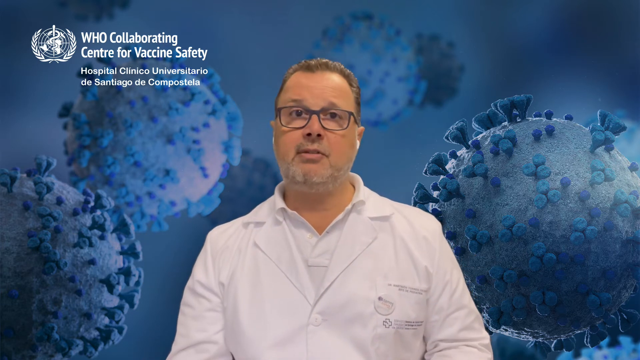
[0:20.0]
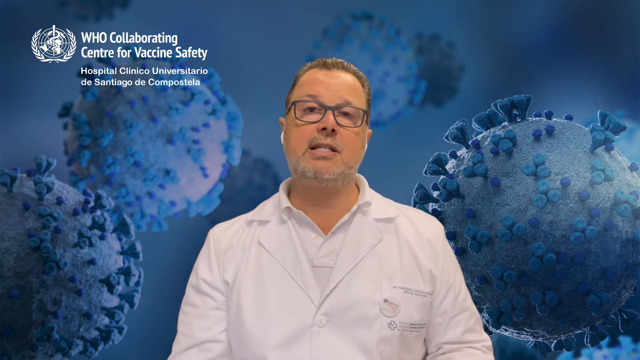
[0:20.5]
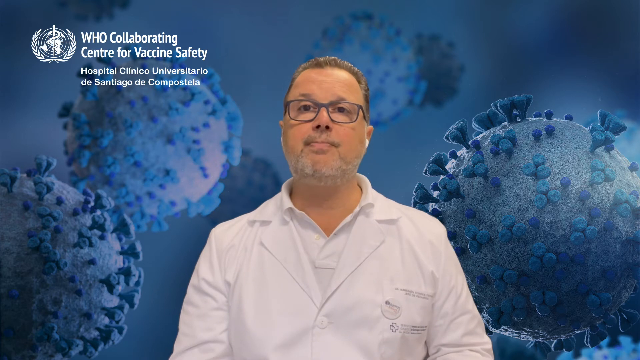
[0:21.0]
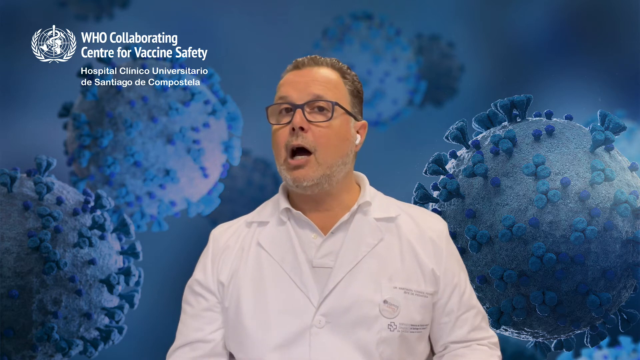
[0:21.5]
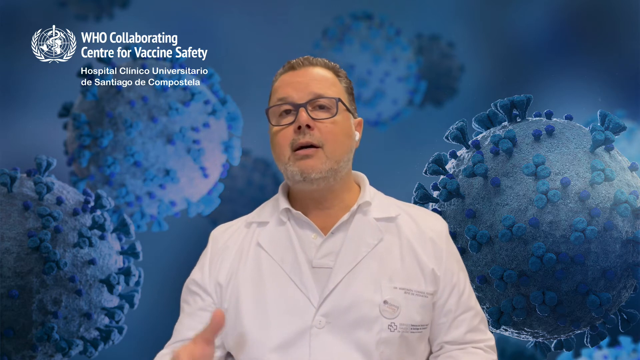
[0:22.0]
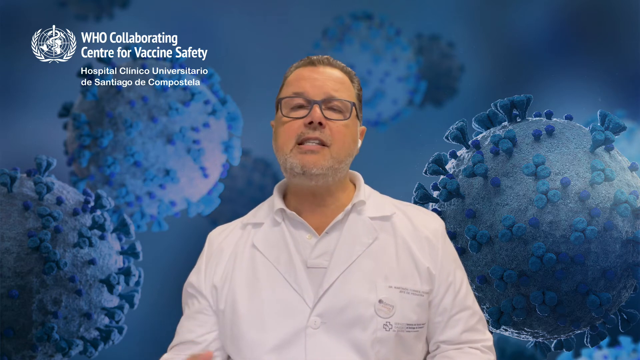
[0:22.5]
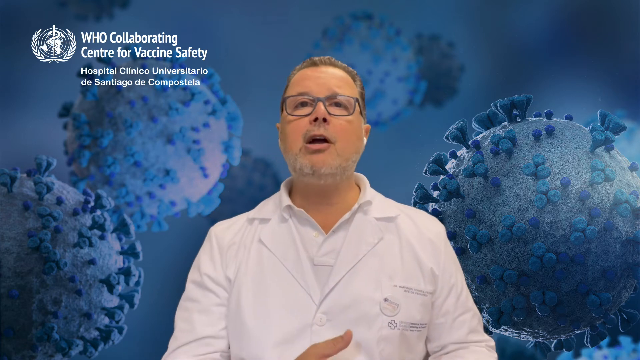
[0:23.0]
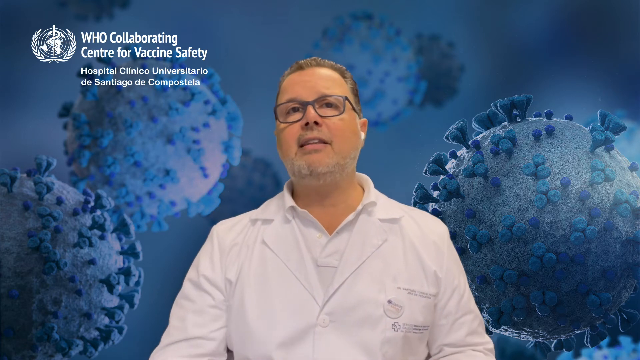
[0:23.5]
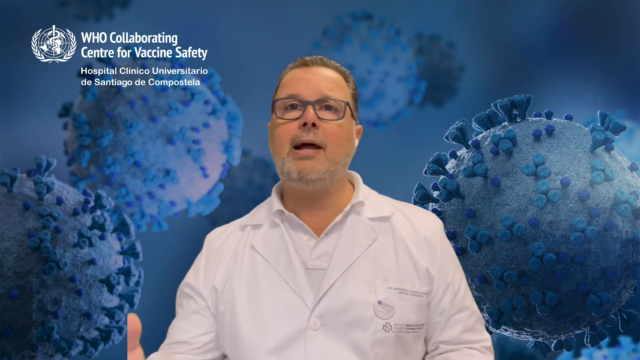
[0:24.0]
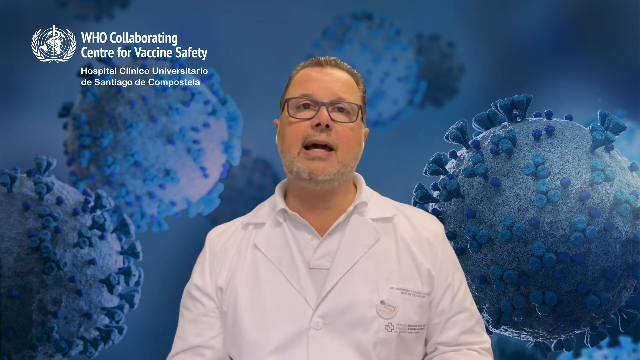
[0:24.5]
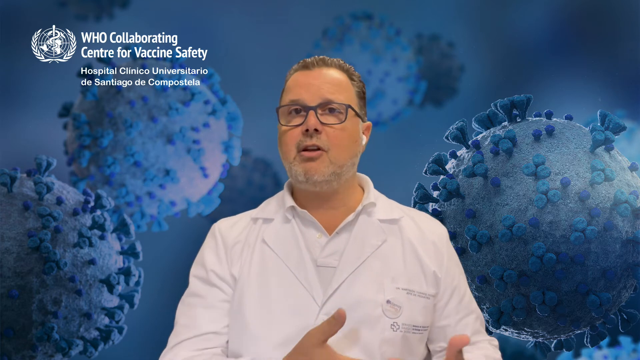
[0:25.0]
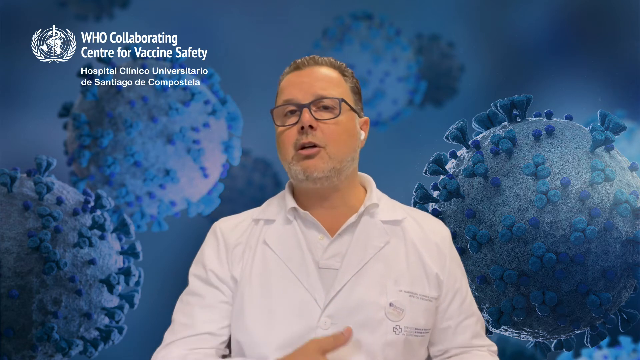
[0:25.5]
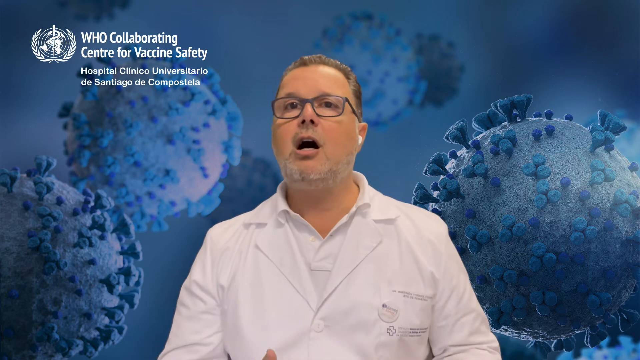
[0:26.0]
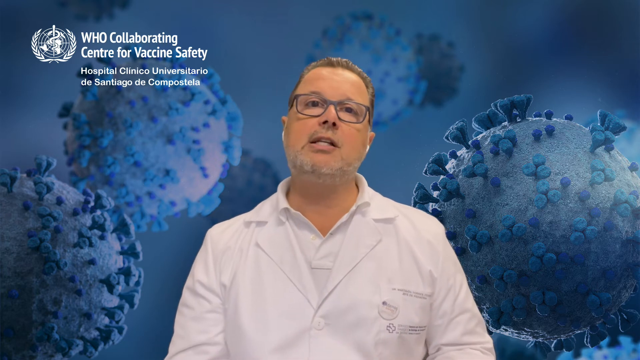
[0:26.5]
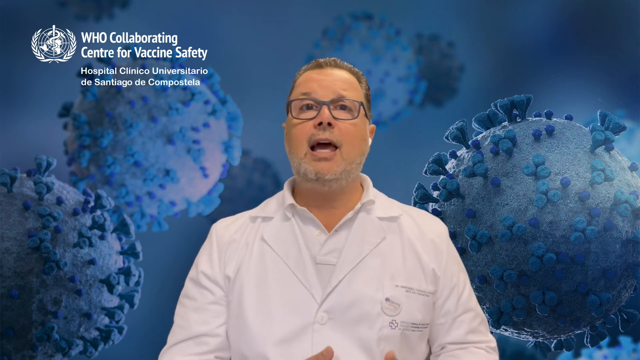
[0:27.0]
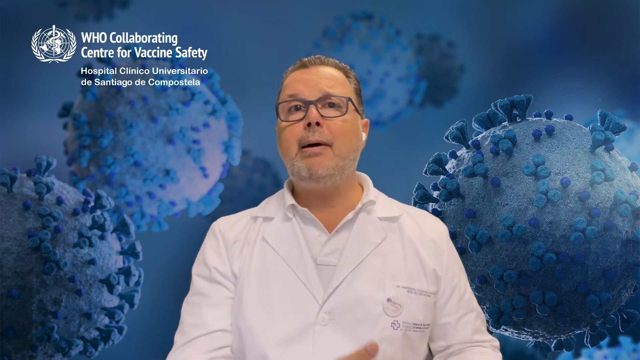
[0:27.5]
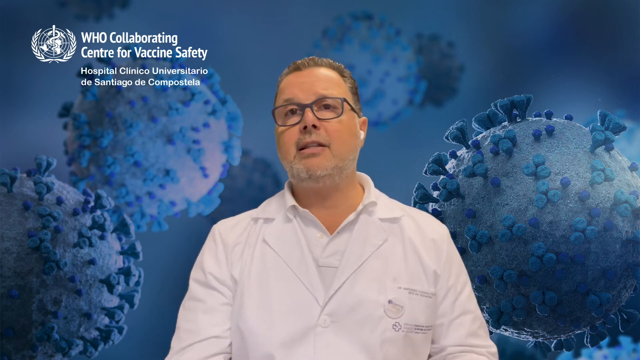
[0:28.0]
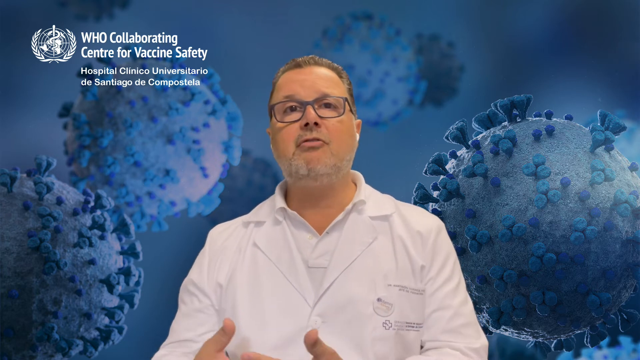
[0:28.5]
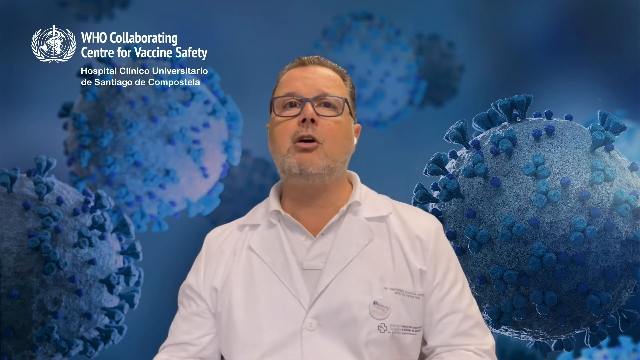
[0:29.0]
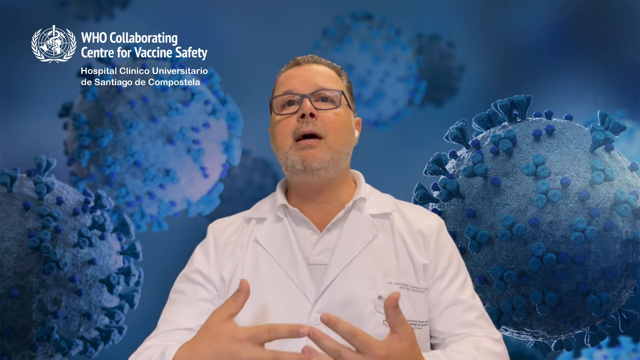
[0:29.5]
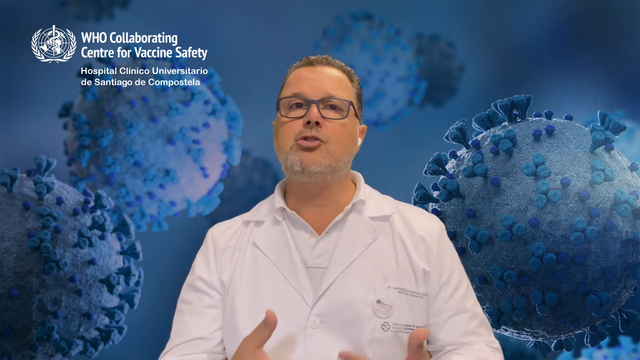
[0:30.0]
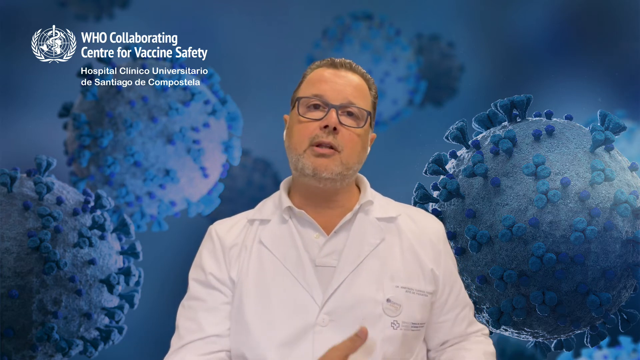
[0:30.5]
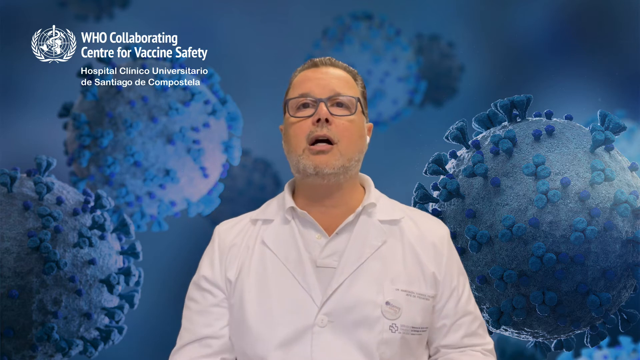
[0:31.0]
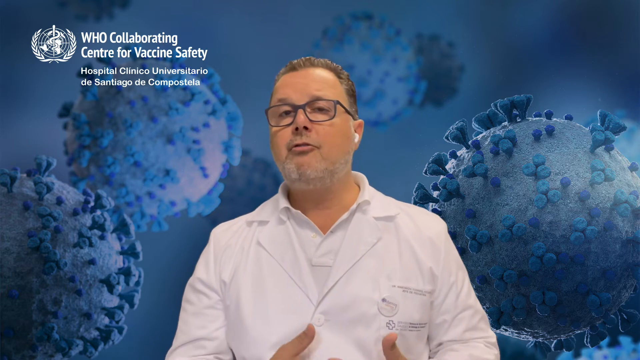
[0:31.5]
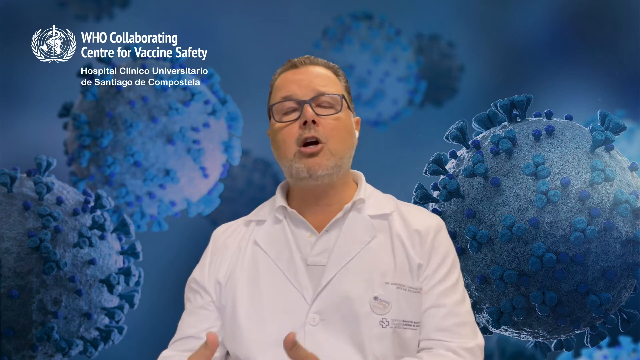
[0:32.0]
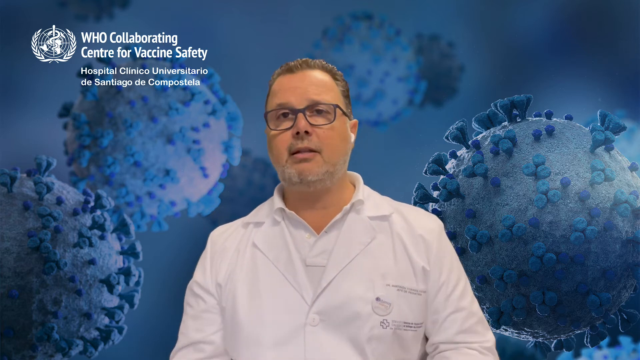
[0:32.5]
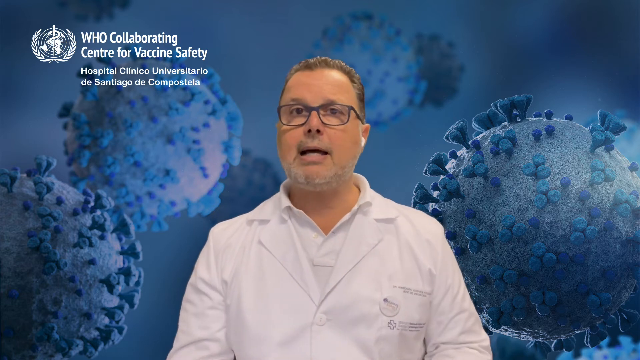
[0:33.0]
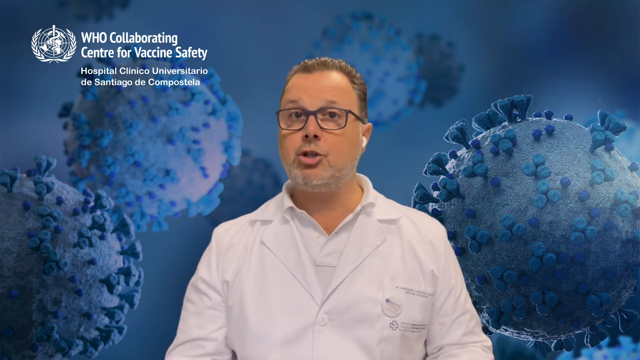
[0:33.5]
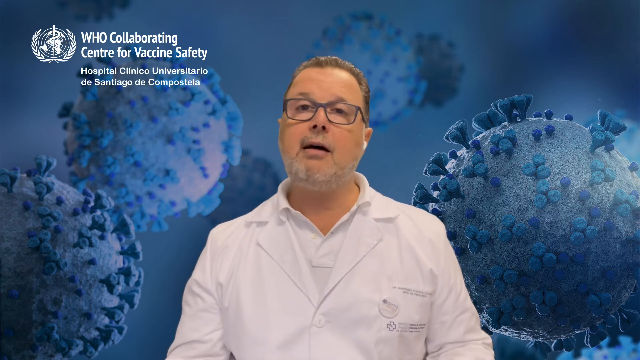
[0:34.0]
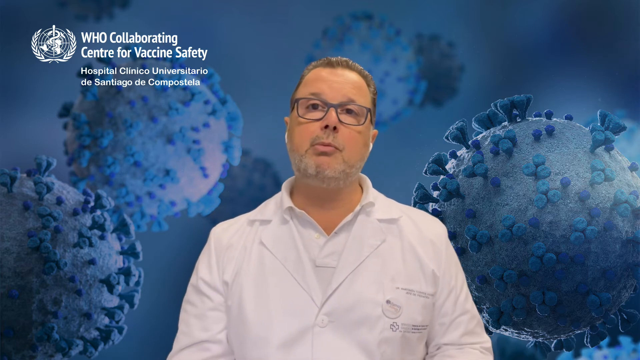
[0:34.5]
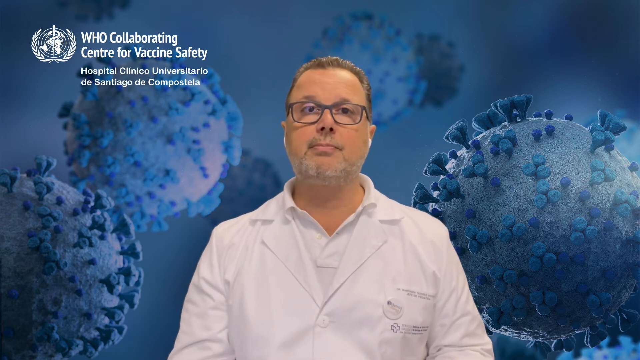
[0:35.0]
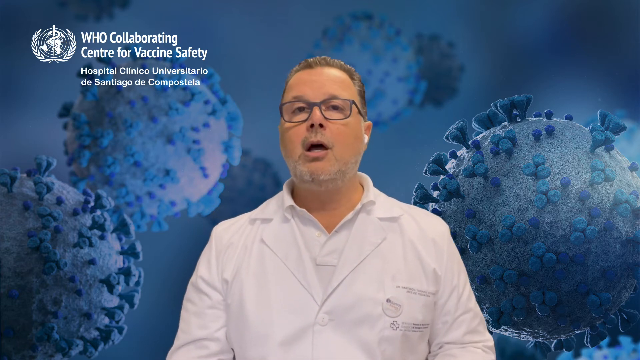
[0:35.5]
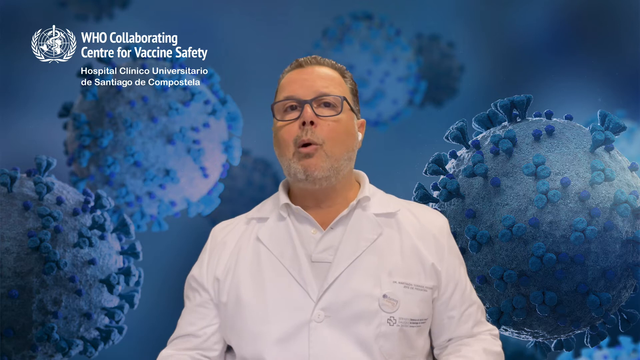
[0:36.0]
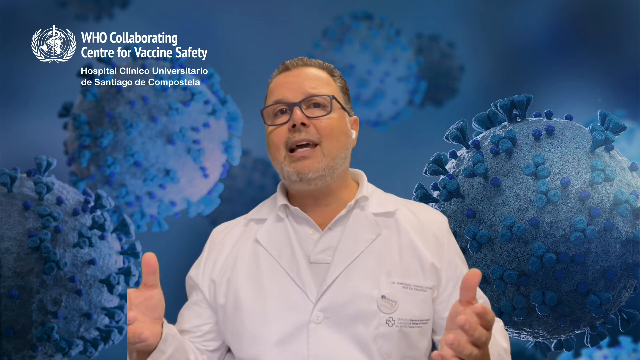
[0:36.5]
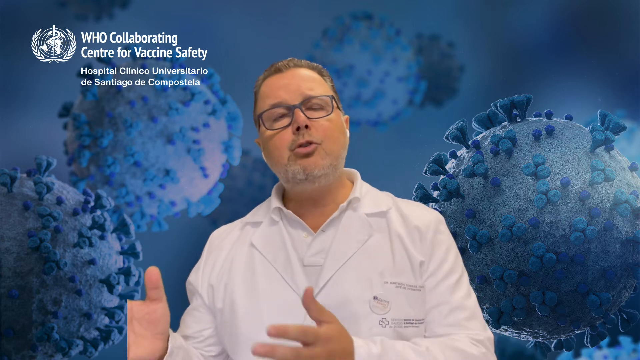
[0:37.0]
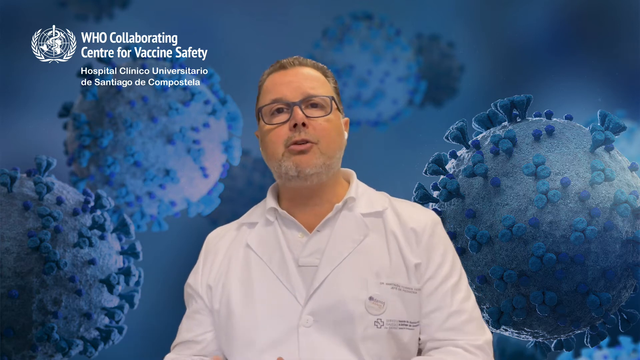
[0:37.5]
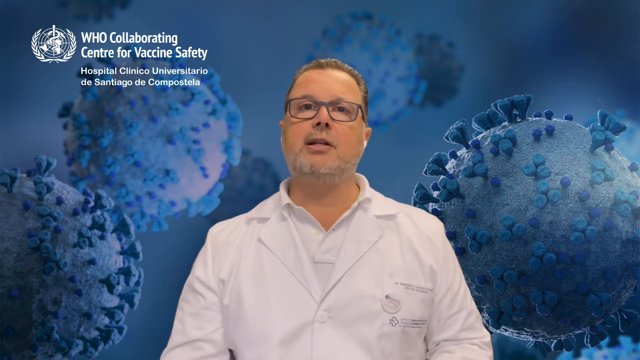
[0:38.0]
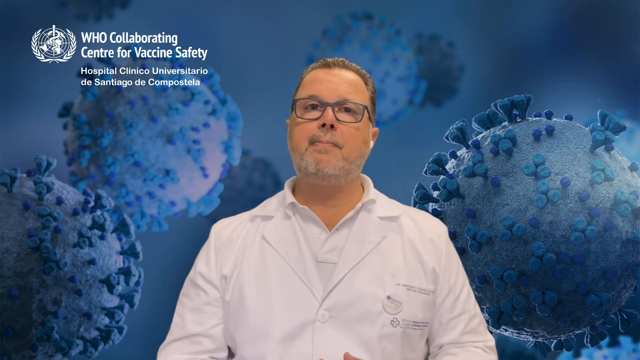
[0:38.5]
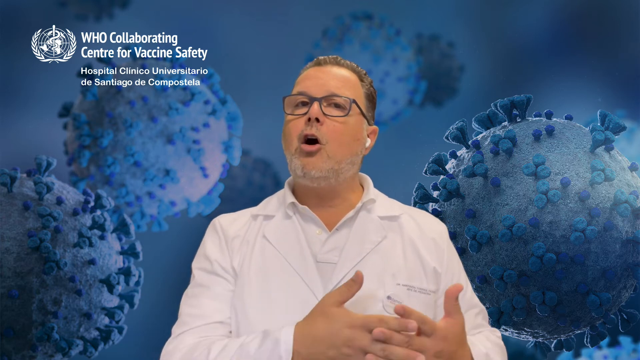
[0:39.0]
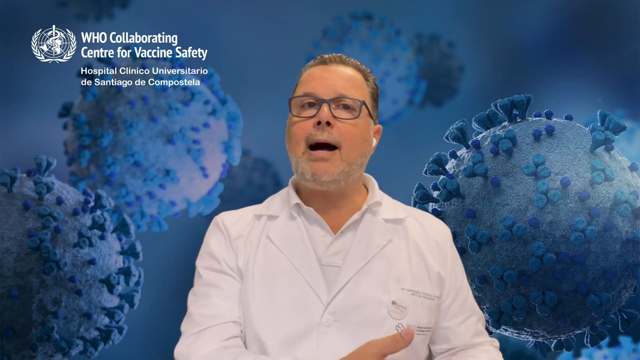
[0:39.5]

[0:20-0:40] Against a blue background are several spherical objects that are supposed to be viruses; eight of them are visible. In the upper left corner is a white symbol, and next to it text reads "WHO Collaborating Center for Vaccine Safety, Hospital Clinico Universitario de Santiago de Compostela". In the center is a man in a white lab coat with black glasses and white pieces of equipment in each ear, facing the viewer. He speaks, gesturing with his right hand and moving his head back and forth. He then begins moving both hands to the left and to the right while continuing to speak and moving his neck back and forth. He alternates between moving both hands together and forming them into rectangular shapes as he emphasizes his speech.